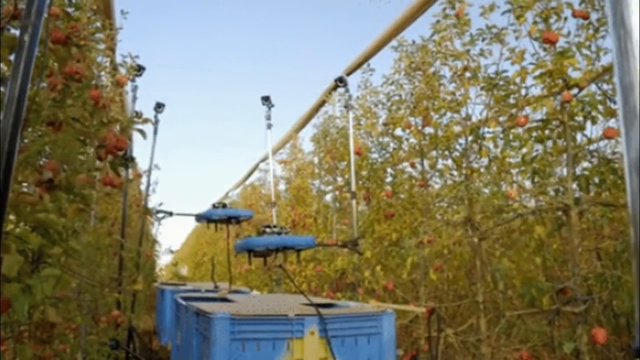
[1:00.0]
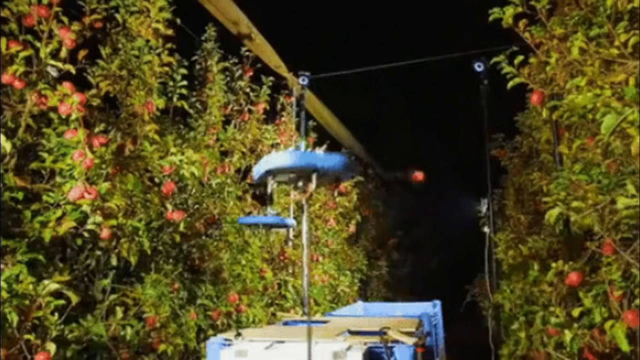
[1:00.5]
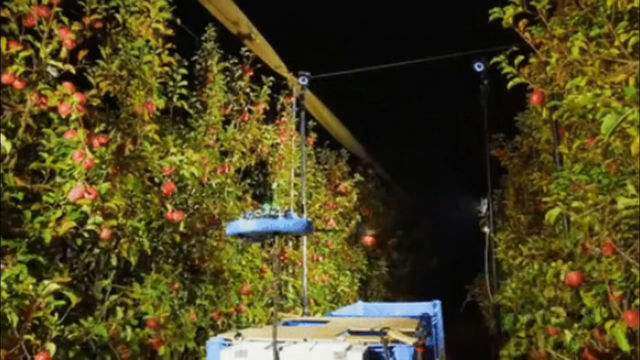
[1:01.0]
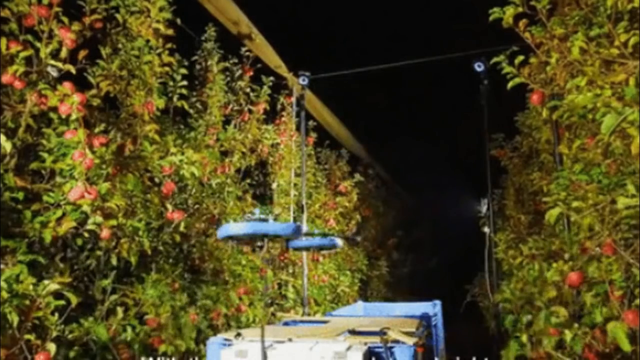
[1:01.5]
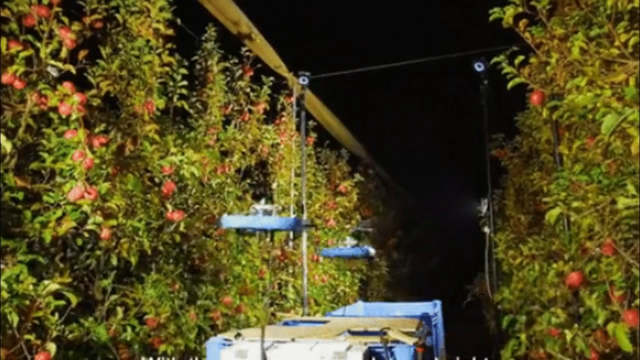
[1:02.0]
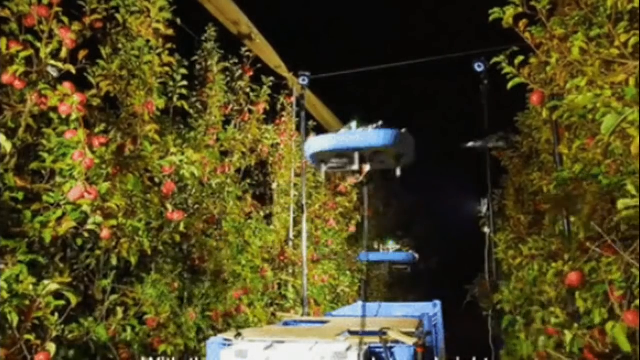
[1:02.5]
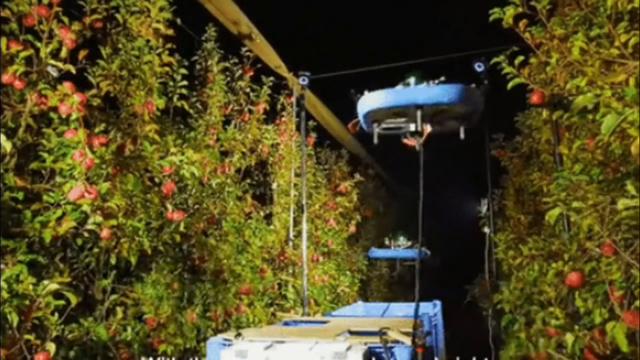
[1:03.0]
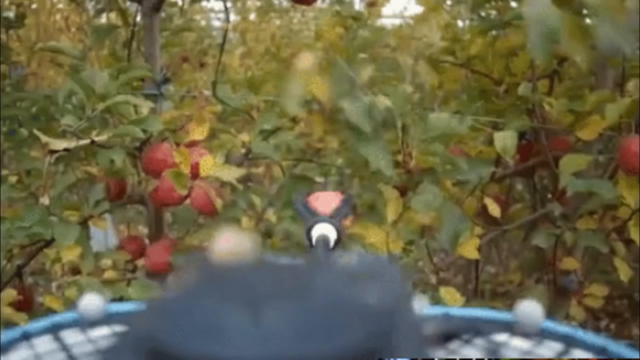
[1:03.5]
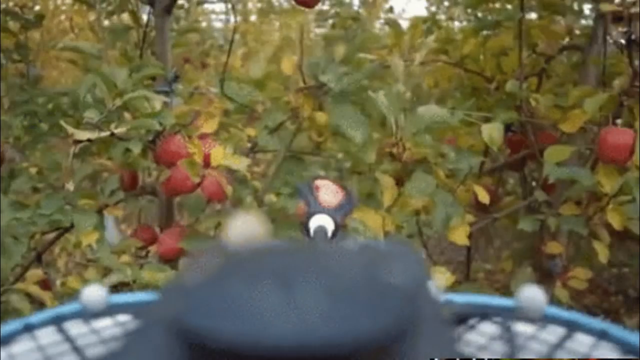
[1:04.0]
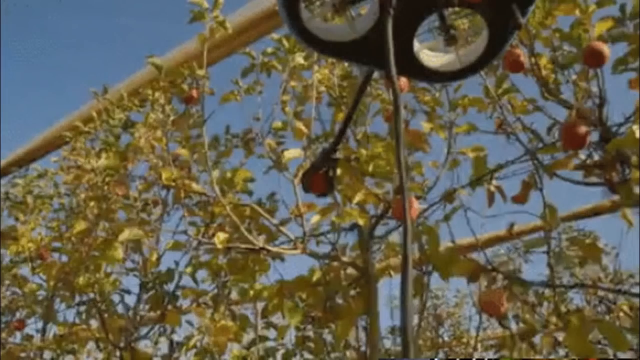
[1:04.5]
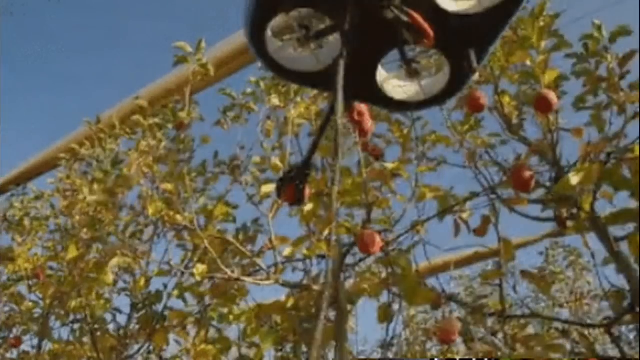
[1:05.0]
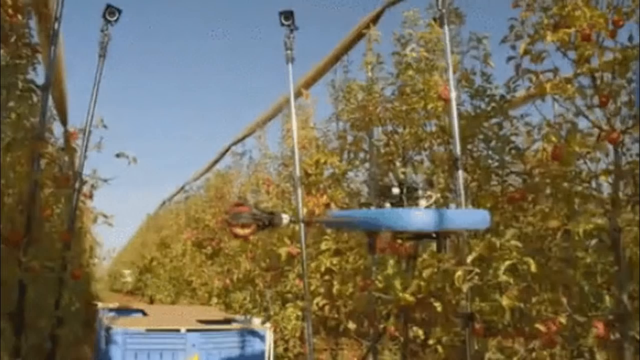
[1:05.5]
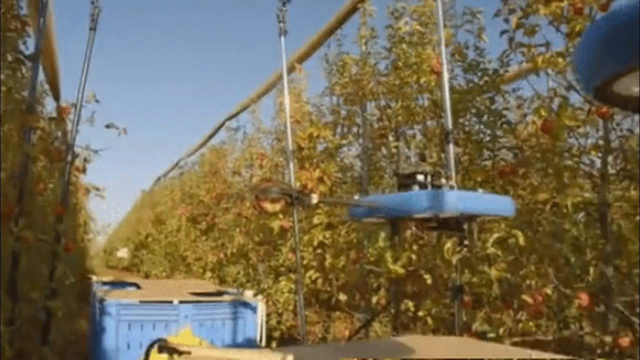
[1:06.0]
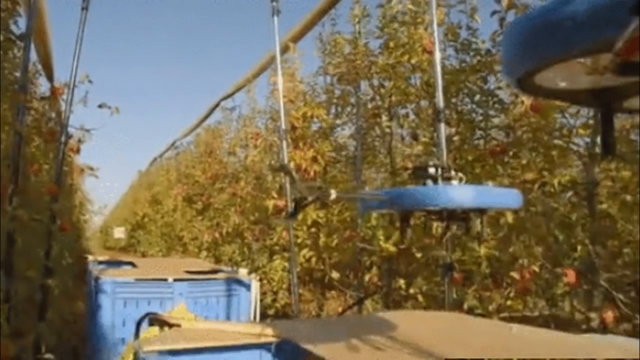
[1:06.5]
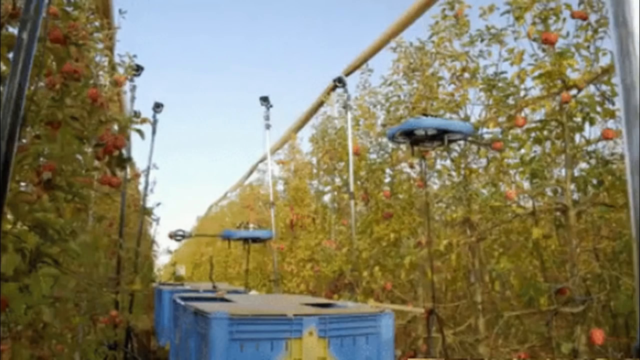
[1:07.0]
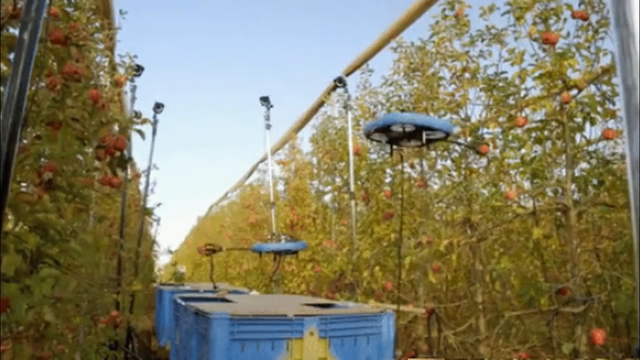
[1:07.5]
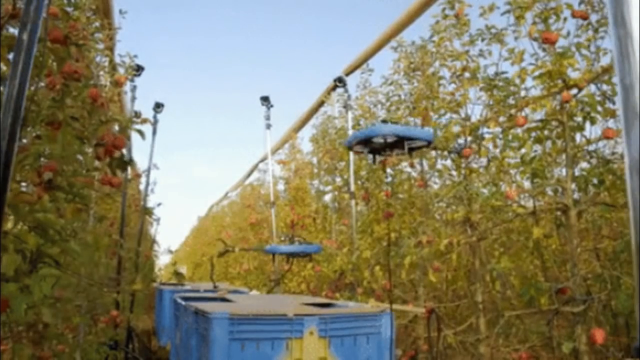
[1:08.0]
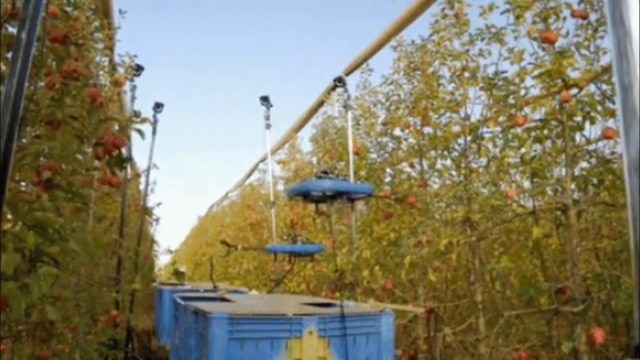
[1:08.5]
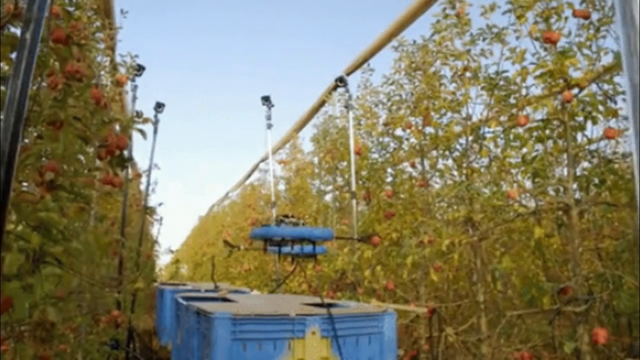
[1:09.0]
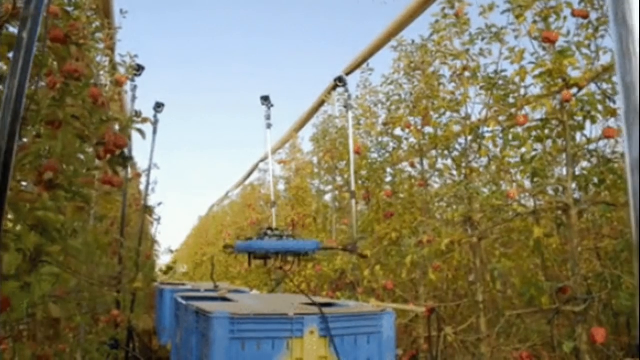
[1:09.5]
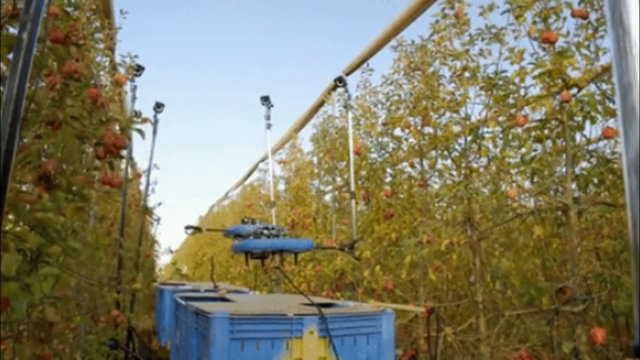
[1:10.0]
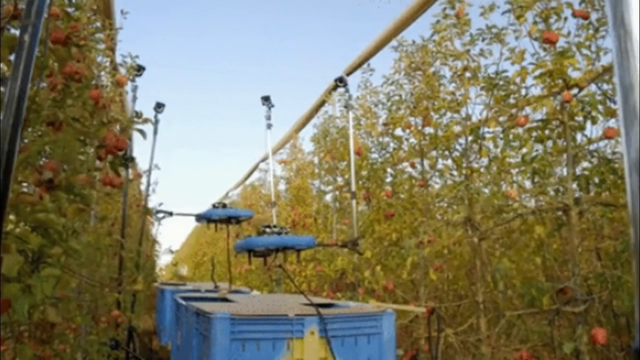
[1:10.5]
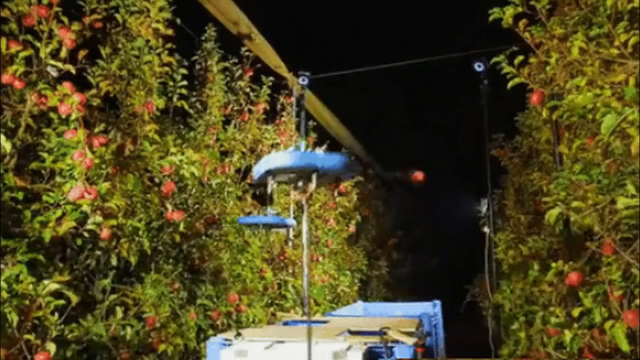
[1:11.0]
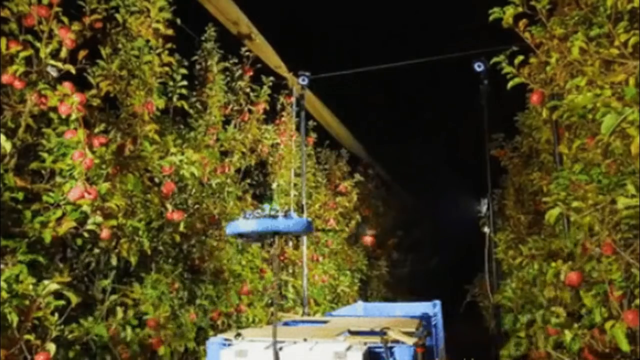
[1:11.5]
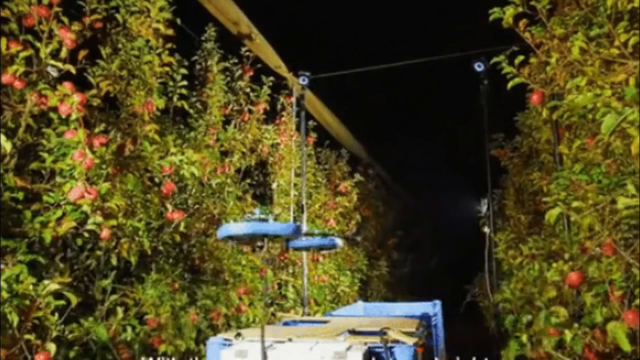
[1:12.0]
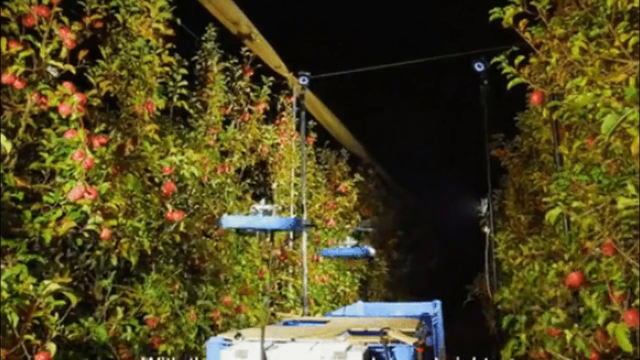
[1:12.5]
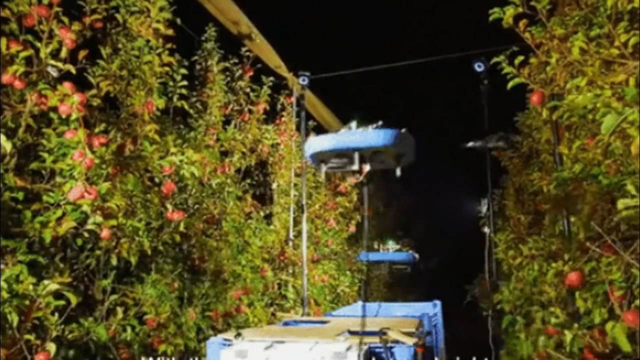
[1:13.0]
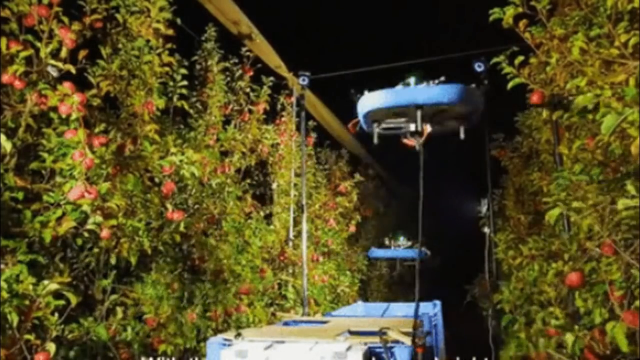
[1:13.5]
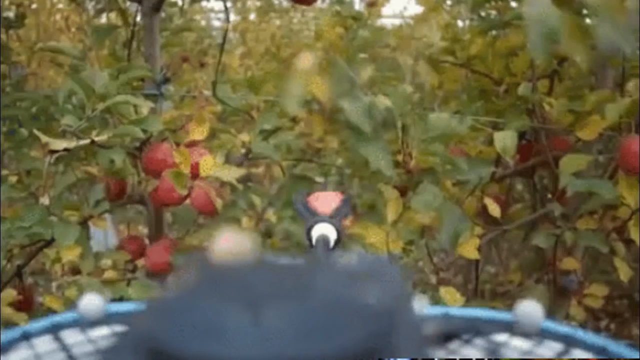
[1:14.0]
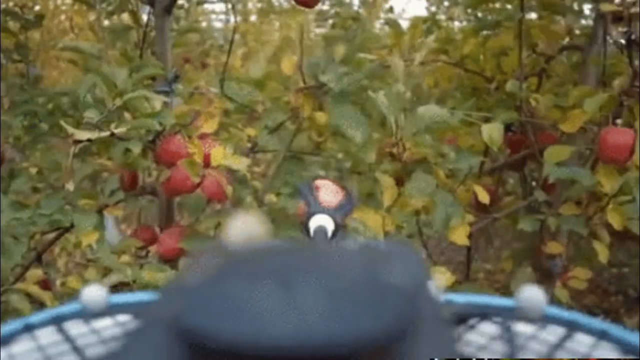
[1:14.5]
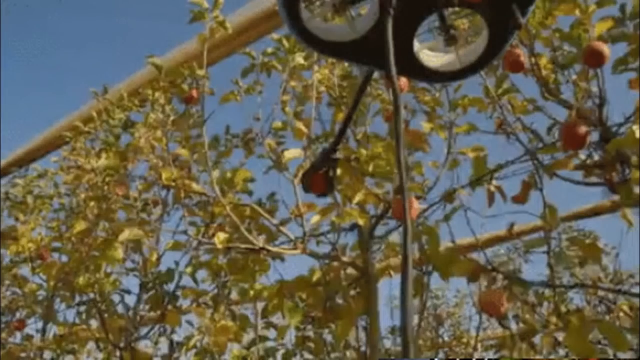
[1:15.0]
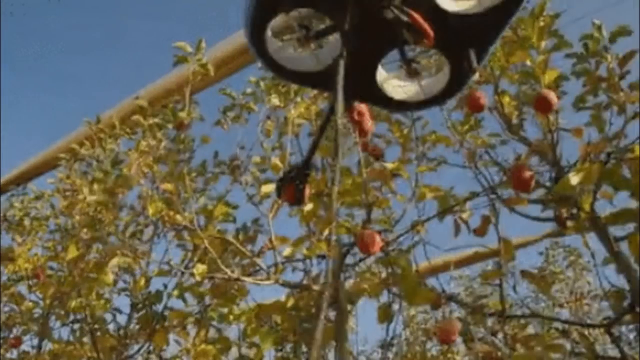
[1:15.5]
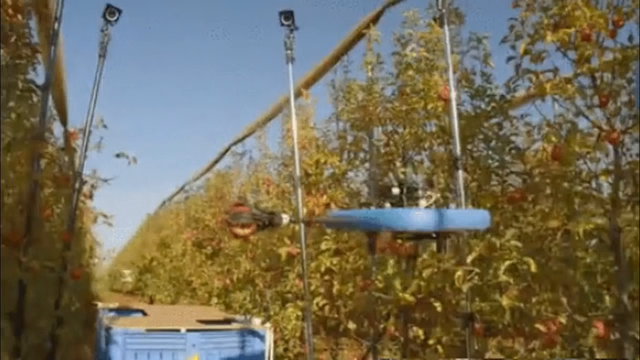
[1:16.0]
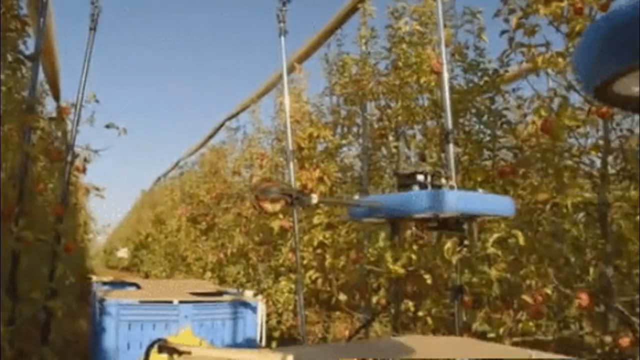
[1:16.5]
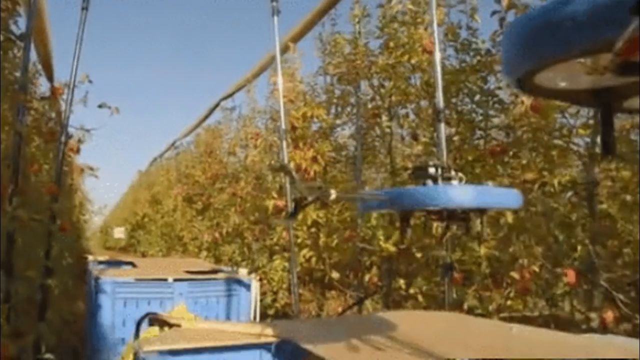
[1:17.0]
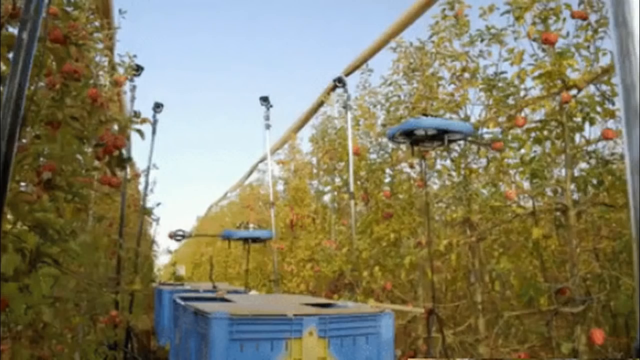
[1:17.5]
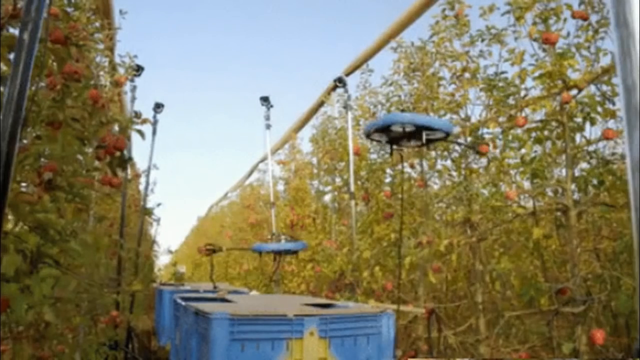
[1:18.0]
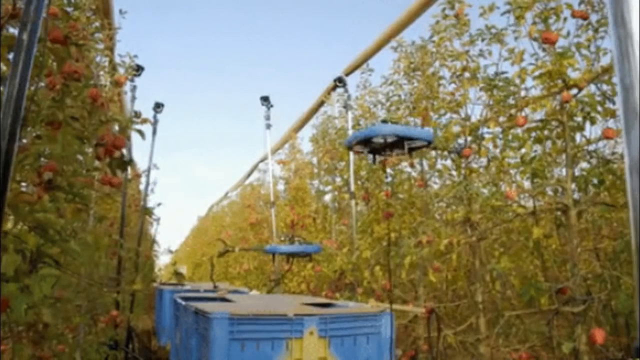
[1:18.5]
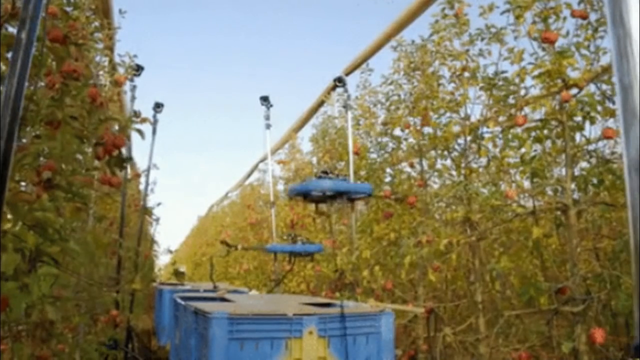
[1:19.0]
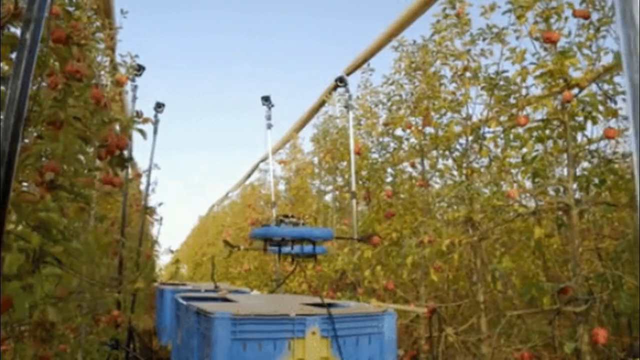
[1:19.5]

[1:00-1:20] In daytime, a row of fruit trees is shown, with two pieces of equipment and flying equipment that goes above the trees to check on them, milling about. The scene then goes dark and the devices keep milling about. The sky becomes very dark, but the area stays well lit by the equipment, with two of the devices kind of flying around and illuminating the area. Everything else is pitch black, while the rows are very well lit.